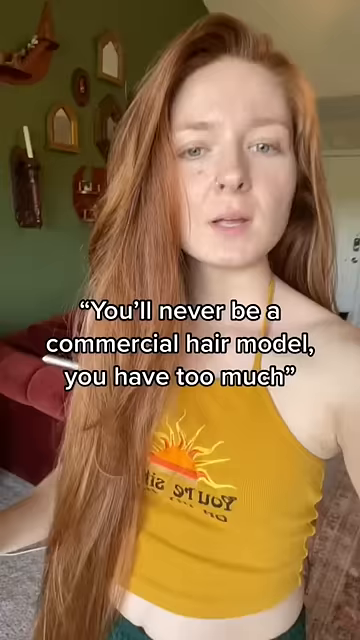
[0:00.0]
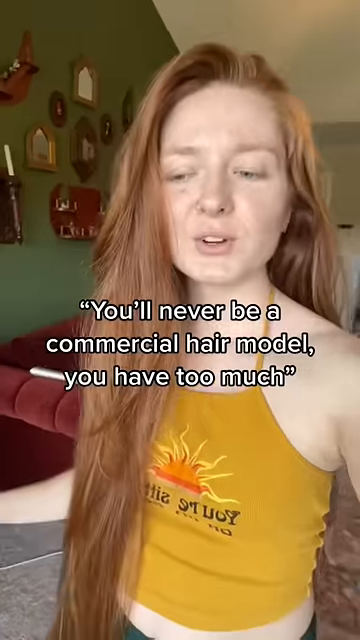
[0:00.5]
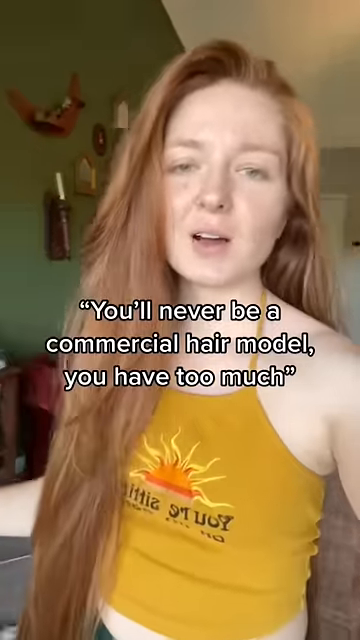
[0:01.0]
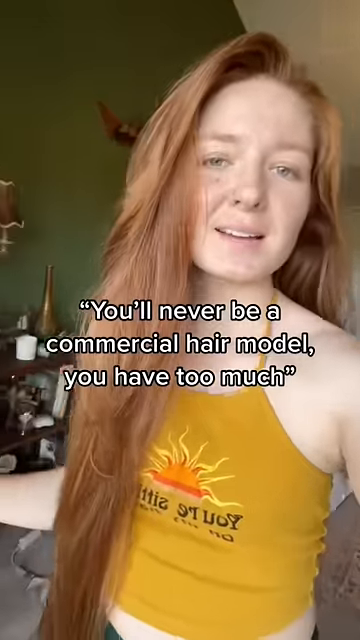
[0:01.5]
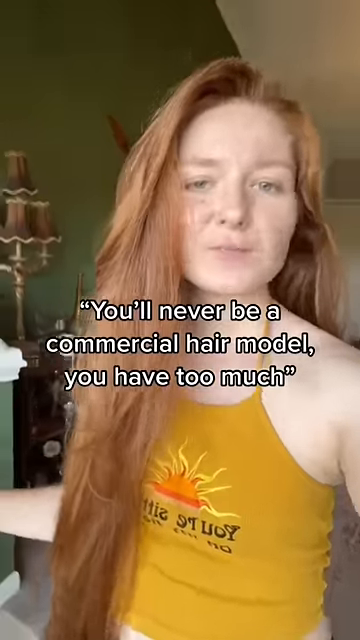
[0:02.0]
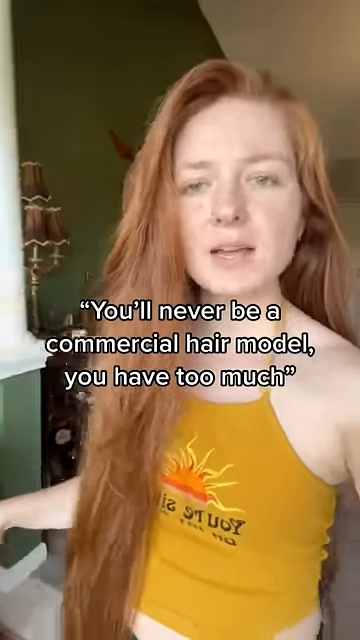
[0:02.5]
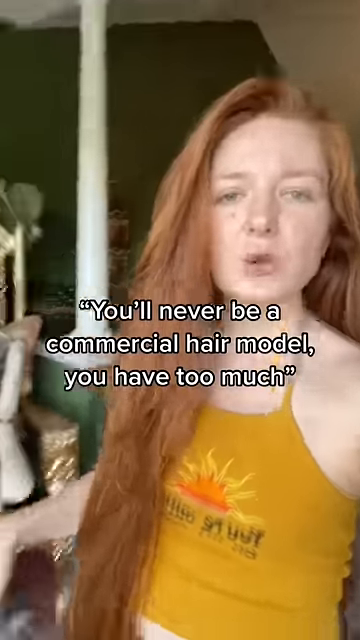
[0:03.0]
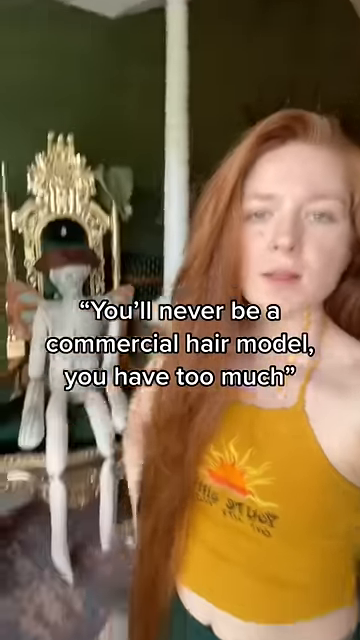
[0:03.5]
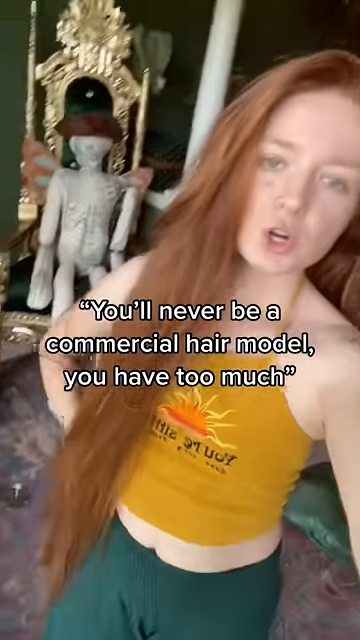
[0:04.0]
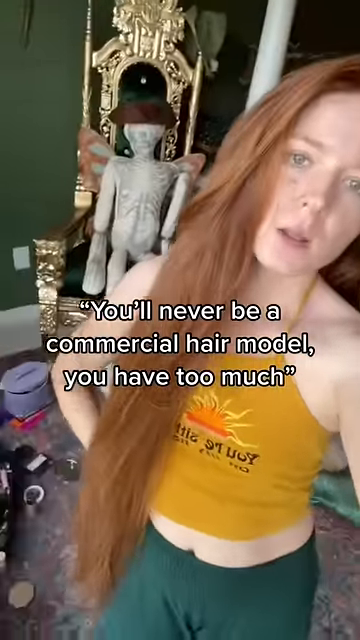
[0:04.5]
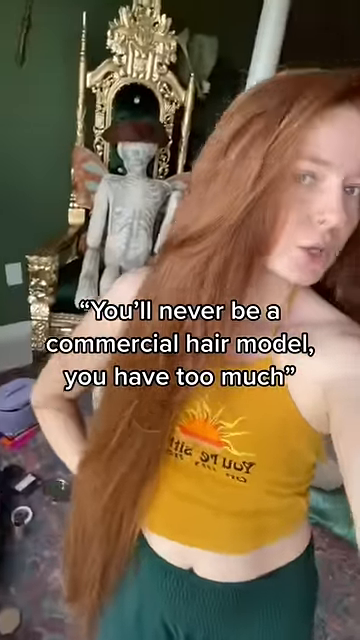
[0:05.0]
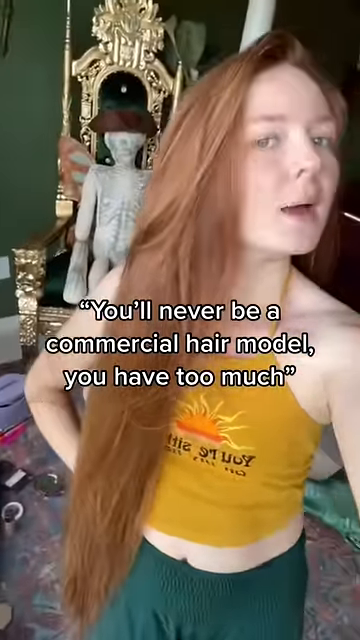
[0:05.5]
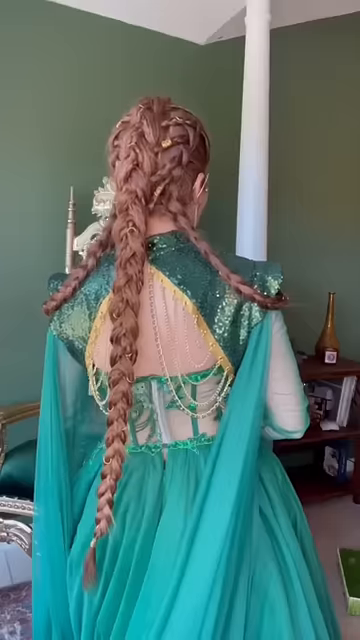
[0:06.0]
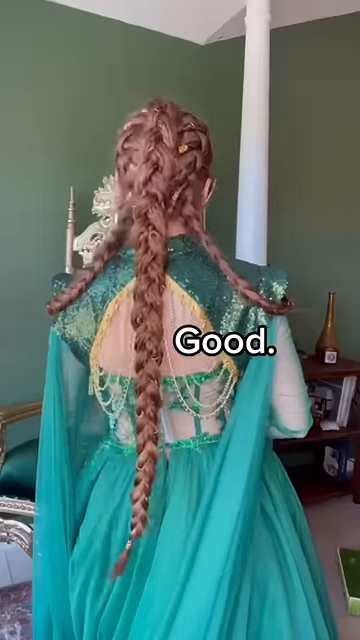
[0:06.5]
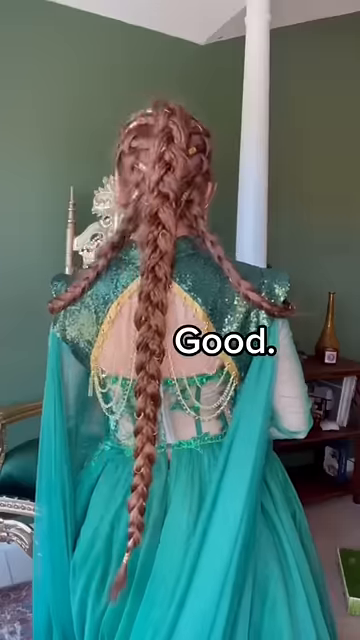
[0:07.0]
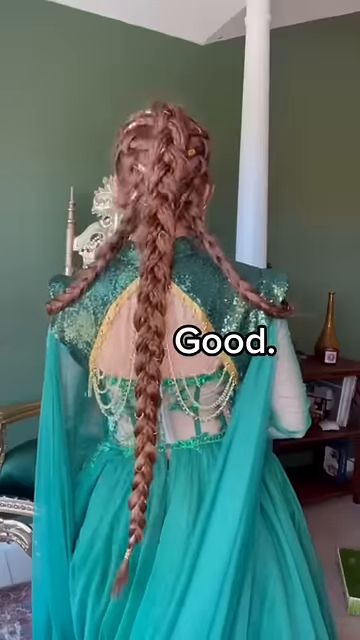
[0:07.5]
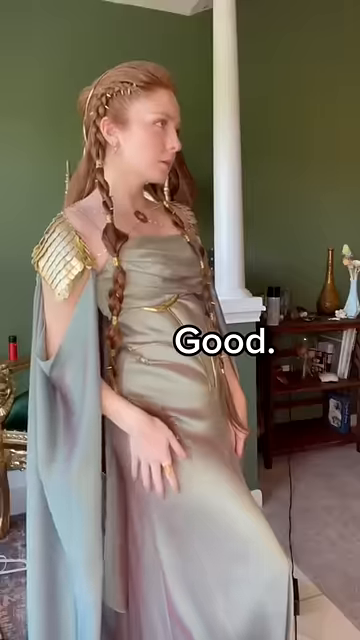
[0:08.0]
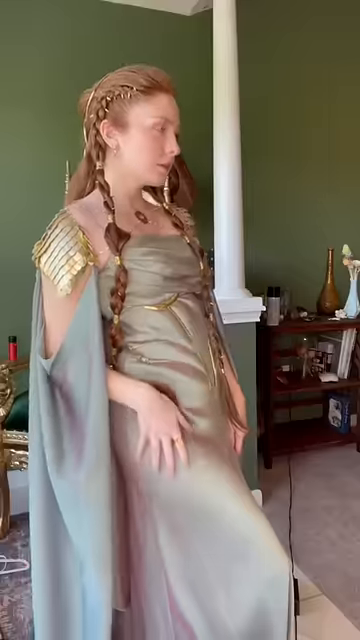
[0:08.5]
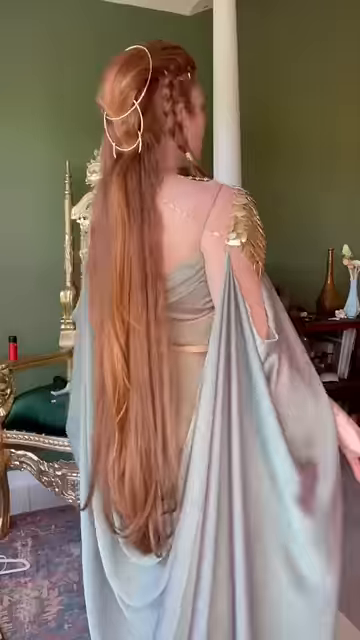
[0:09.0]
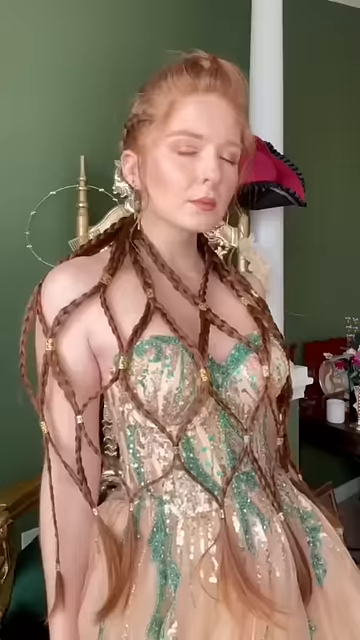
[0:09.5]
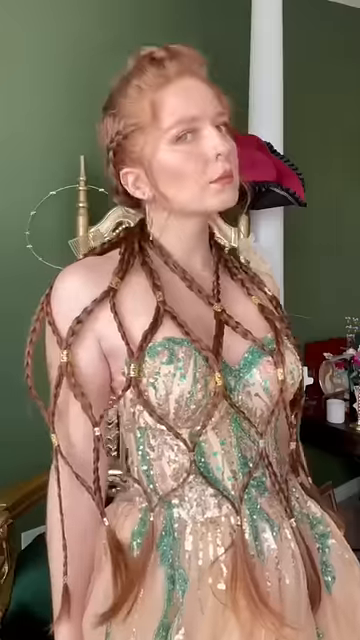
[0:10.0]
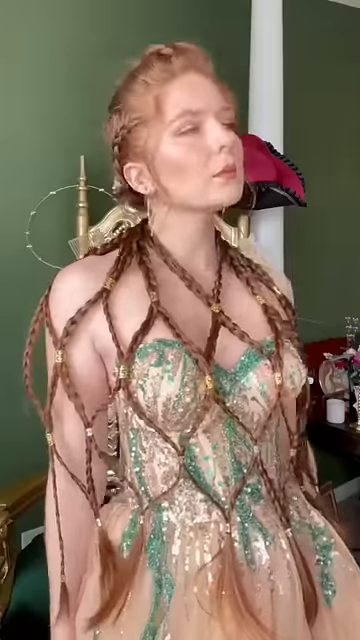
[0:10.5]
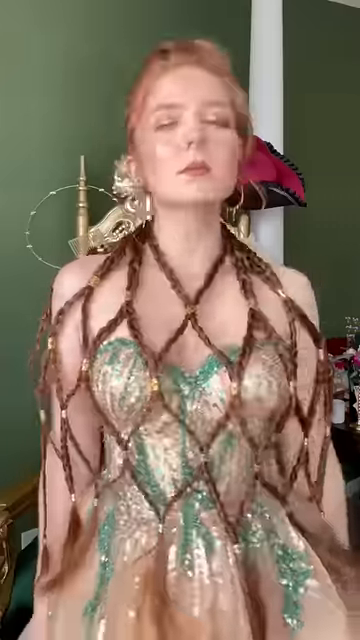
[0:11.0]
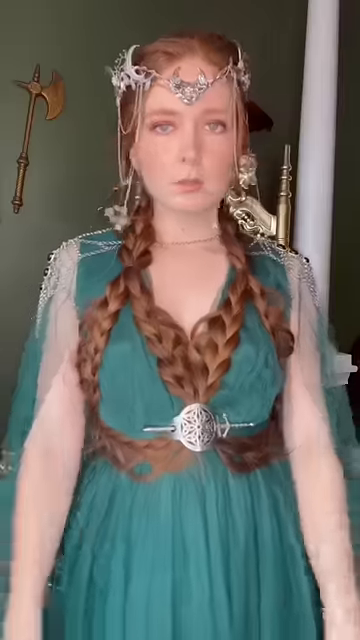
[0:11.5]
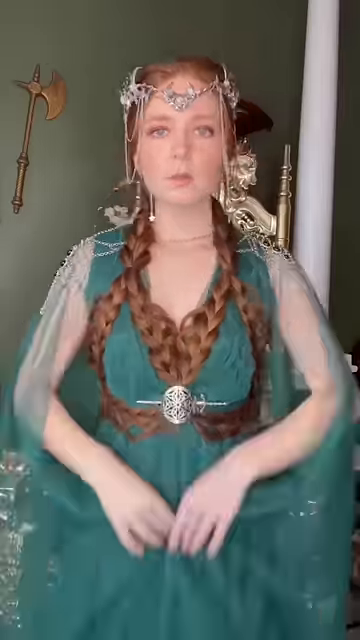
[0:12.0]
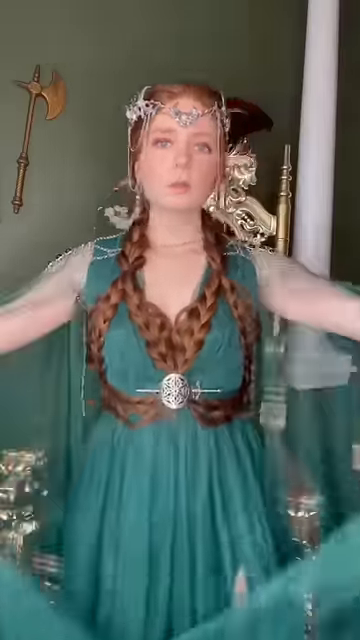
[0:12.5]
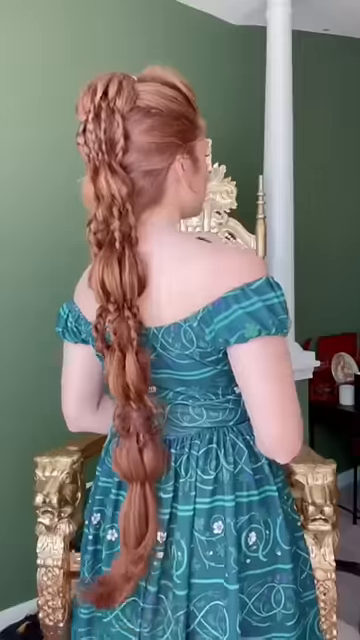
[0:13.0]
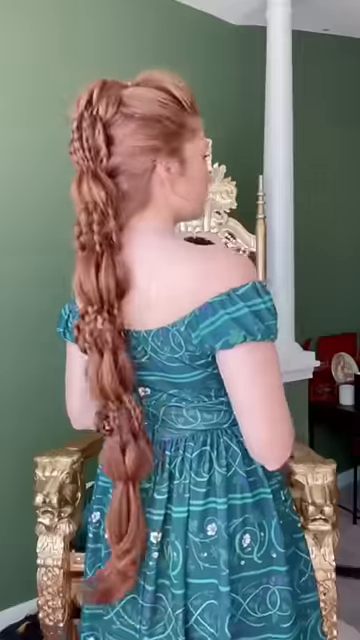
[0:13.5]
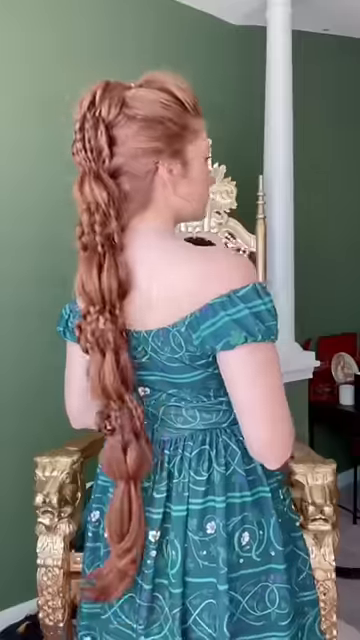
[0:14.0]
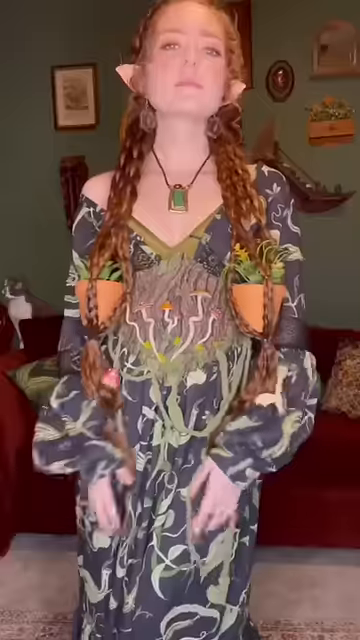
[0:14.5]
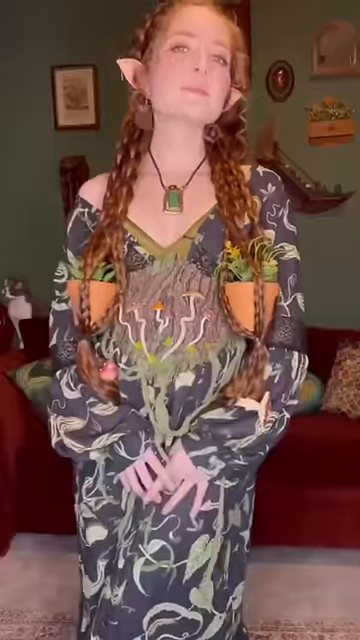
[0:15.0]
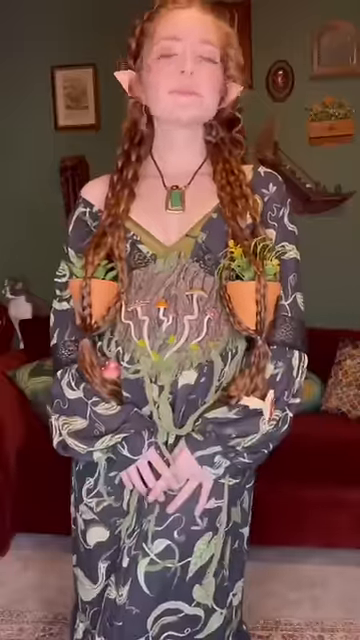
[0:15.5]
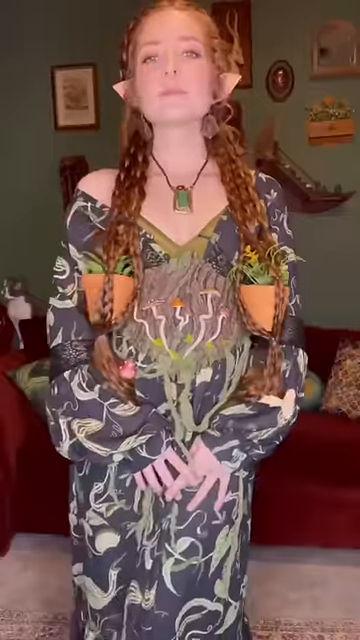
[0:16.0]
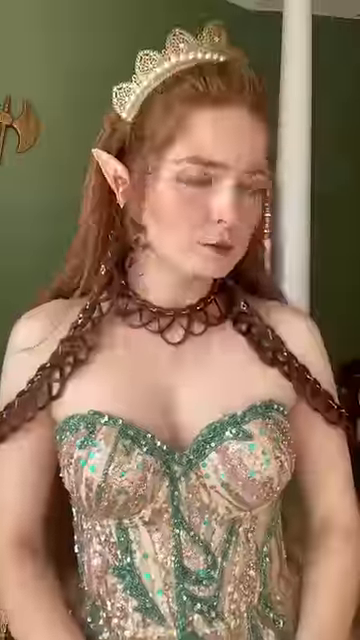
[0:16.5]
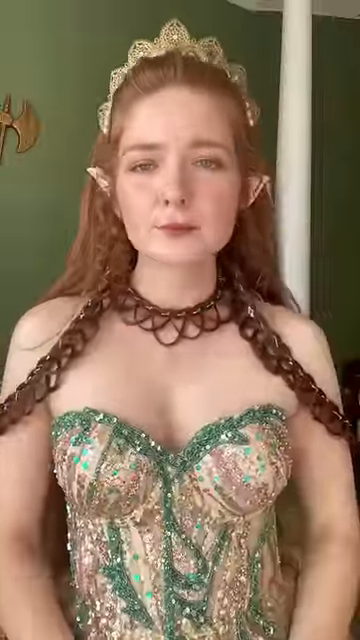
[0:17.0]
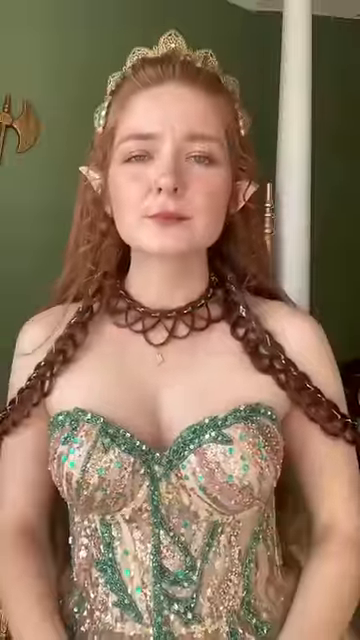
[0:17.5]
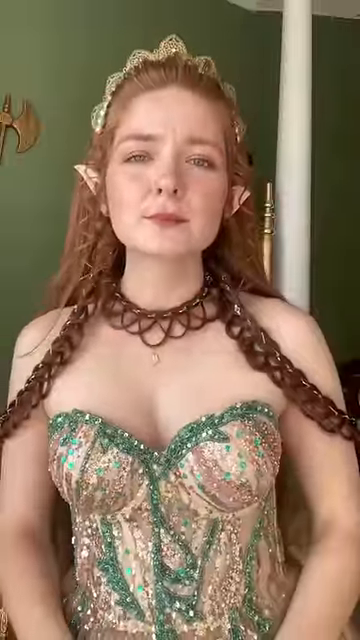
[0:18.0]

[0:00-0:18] A woman with long red hair holds the camera and talks to the audience, with white on-screen text reading "you'll never be a commercial hair model. You have too much." She is saying to the audience, "you'll never be a commercial hair model." Behind her is a room with a green wall holding various items, including mirrors and a candle holder, and there is a burgundy couch. In the next scene she walks, saying the line as if singing it, then stops in front of a gold chair on which there appears to be a little skeleton-like dummy sitting. She tilts her head. The next scene shows her from the back with the word "good" on the screen. She is in the same room, almost in cosplay, wearing a teal princess outfit, her hair done differently in three braids, with her back to the camera. She is then seen from the side in another cosplay, her hair braided a different way. In another princess outfit, her hair is braided to the front in an almost lattice-like pattern, connected like a necklace. Next she looks more like a fairy princess, possibly the front view of the first outfit: seen from the front, her hair is braided and she seems to have fairy wings, which she spreads. Another shot from the back shows her in a different dress of the same turquoise color, with her hair in a different braided style, long, like a high bun and a long braid. In another look she has elf ears and her hair is braided a different way. Finally she wears a green dress, her hair braided in an almost necklace-like pattern.